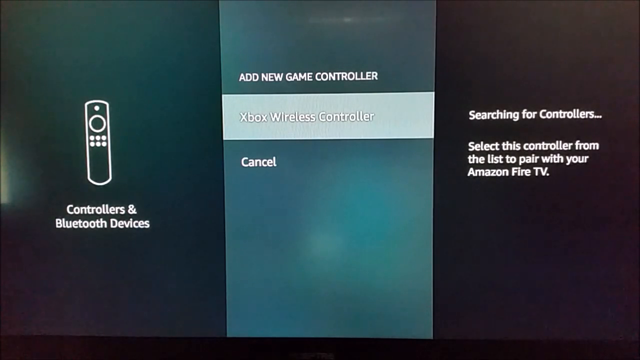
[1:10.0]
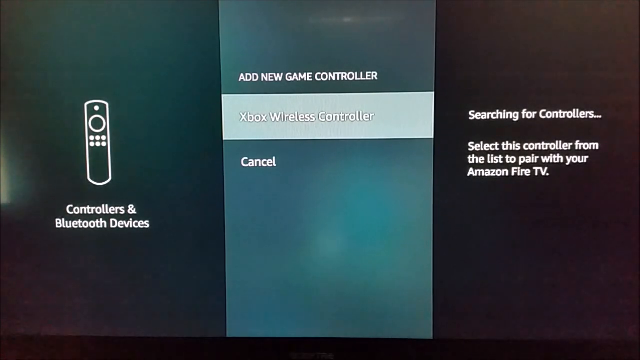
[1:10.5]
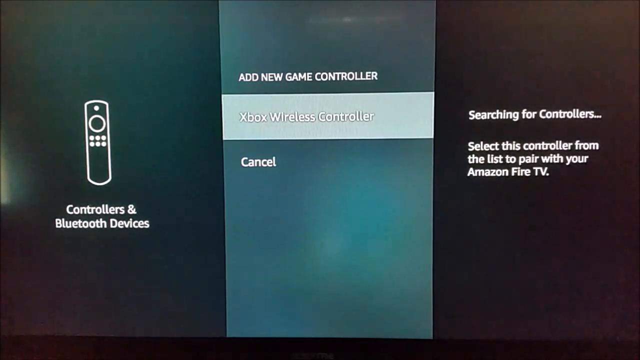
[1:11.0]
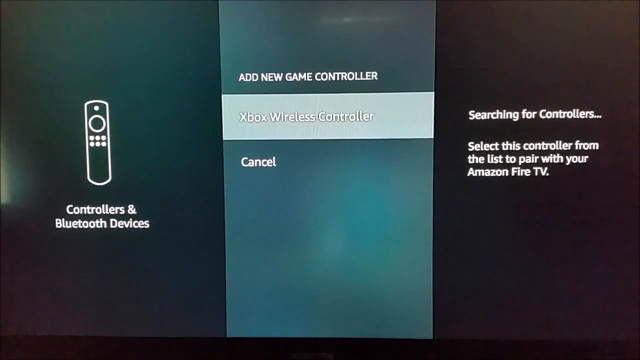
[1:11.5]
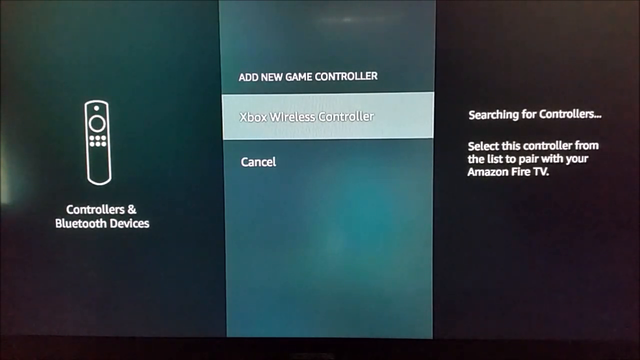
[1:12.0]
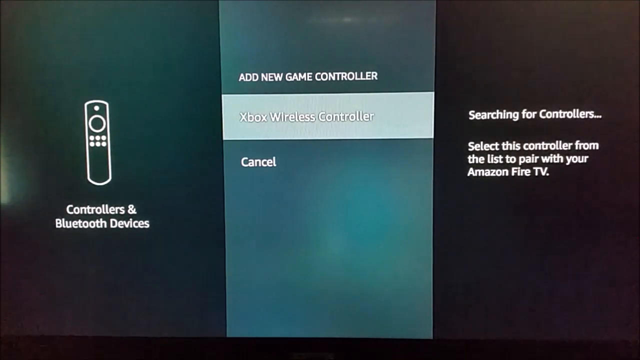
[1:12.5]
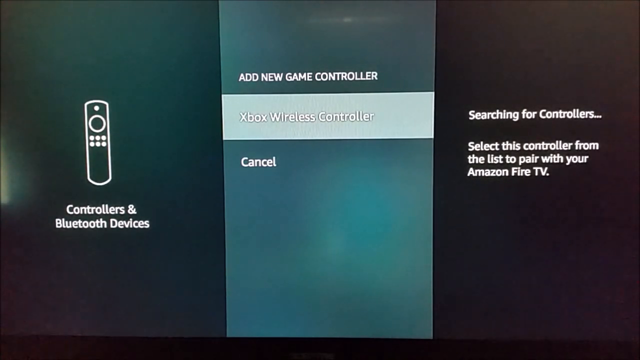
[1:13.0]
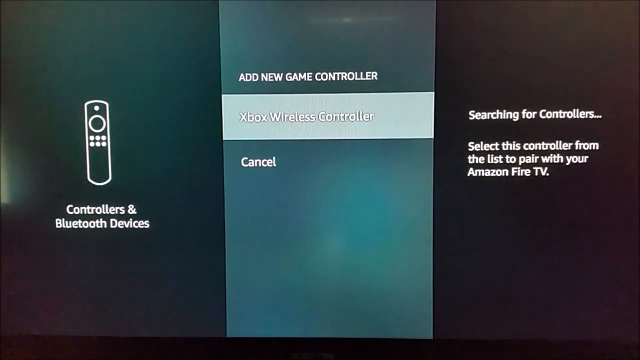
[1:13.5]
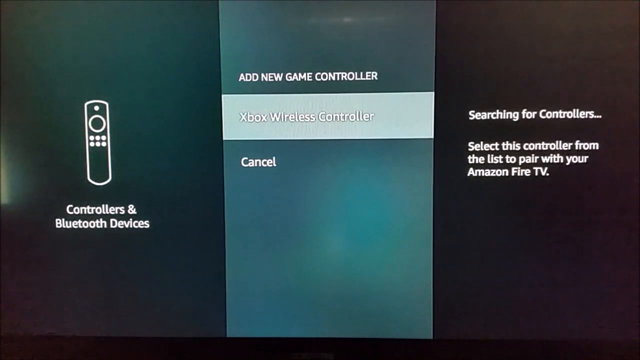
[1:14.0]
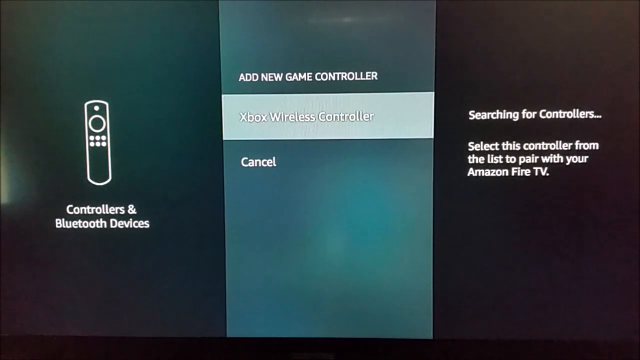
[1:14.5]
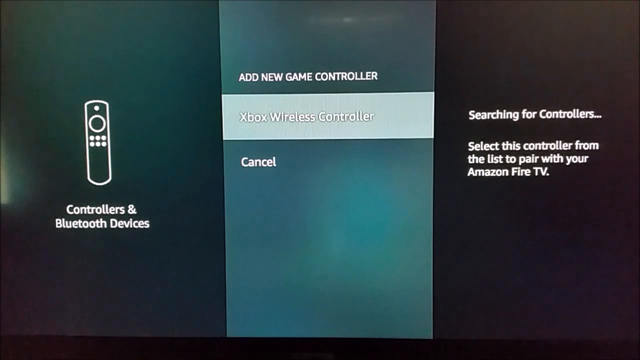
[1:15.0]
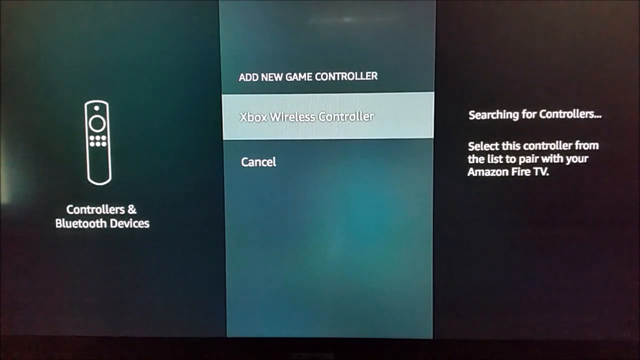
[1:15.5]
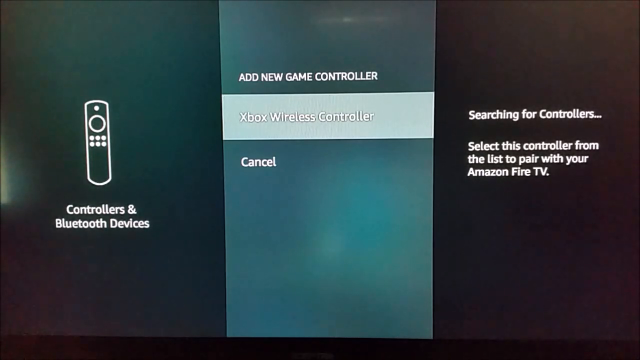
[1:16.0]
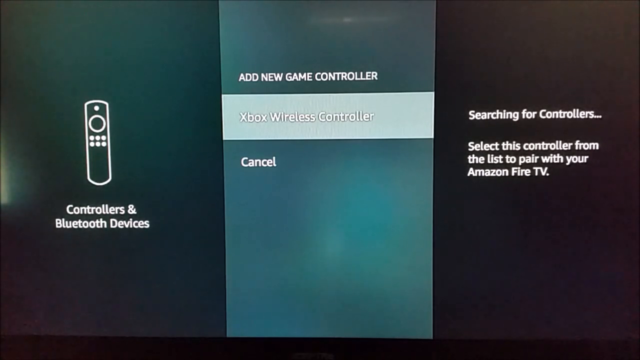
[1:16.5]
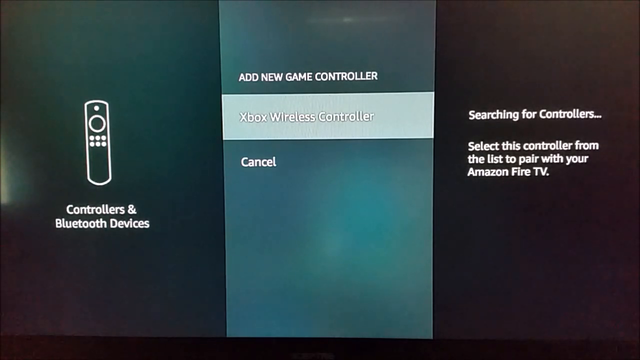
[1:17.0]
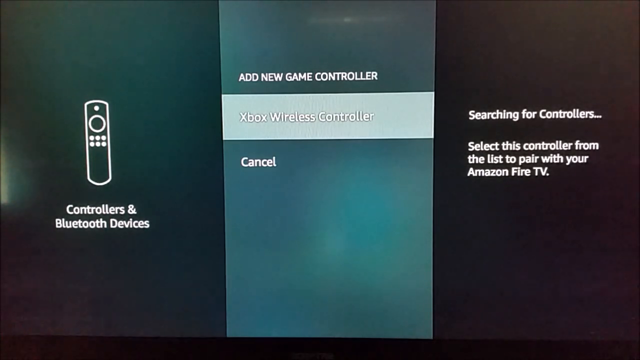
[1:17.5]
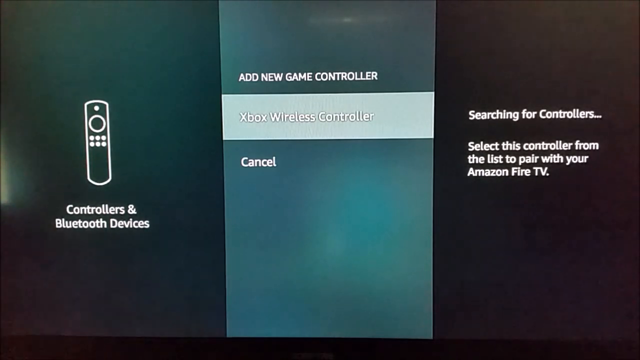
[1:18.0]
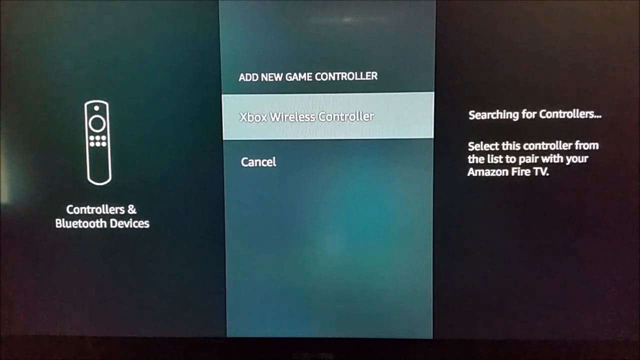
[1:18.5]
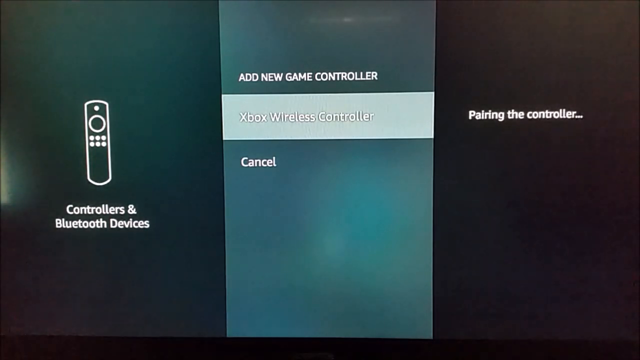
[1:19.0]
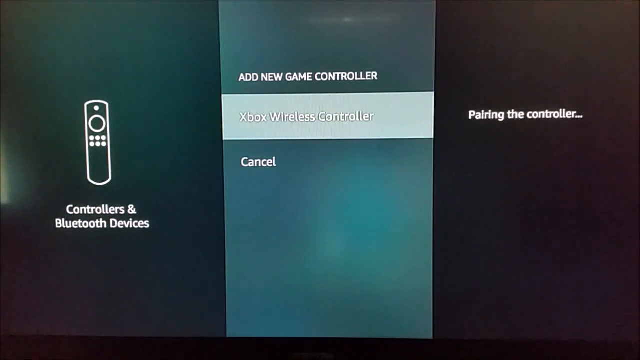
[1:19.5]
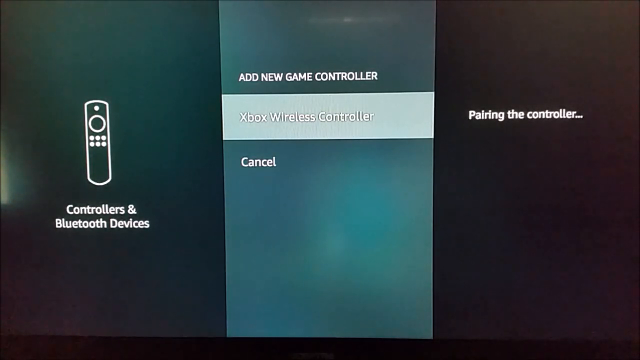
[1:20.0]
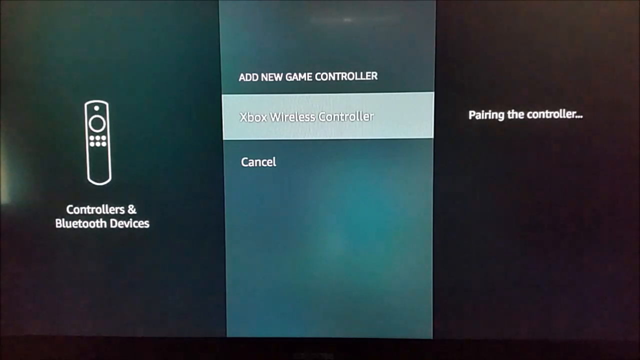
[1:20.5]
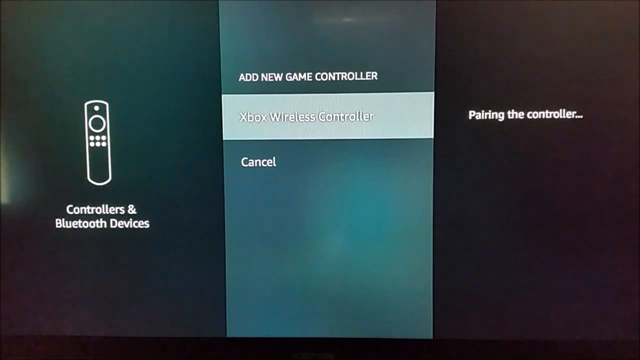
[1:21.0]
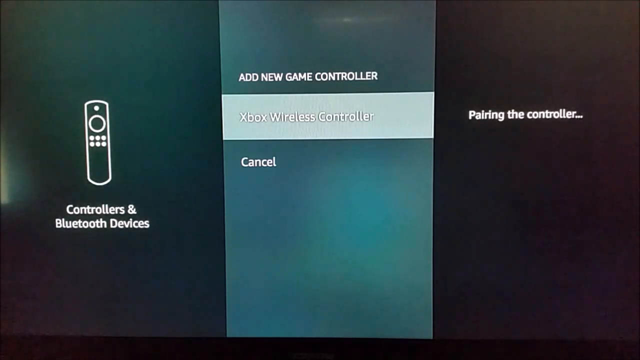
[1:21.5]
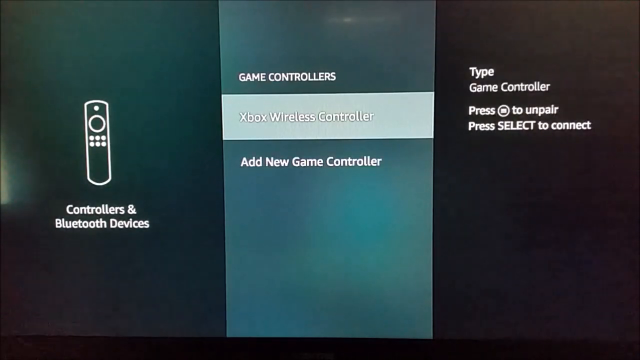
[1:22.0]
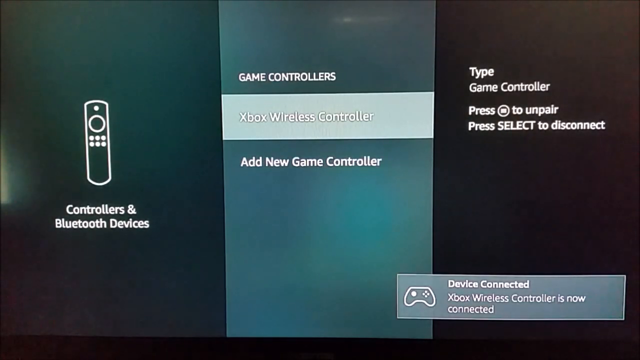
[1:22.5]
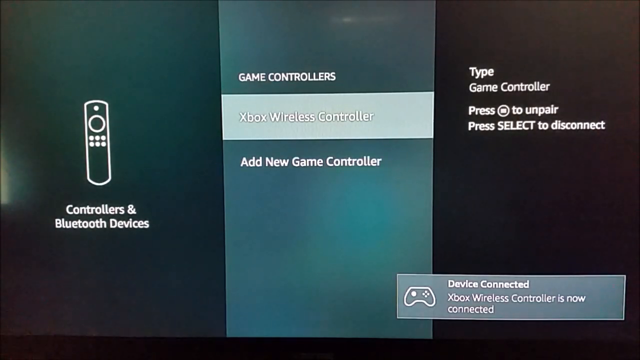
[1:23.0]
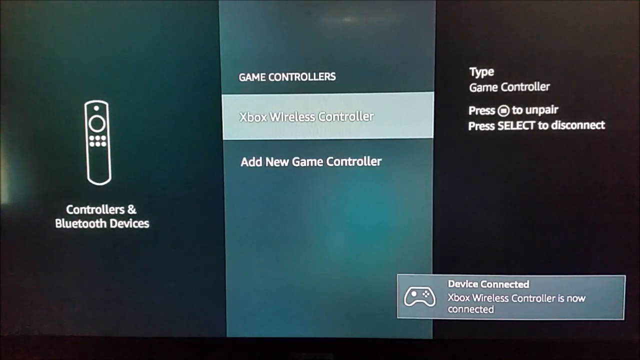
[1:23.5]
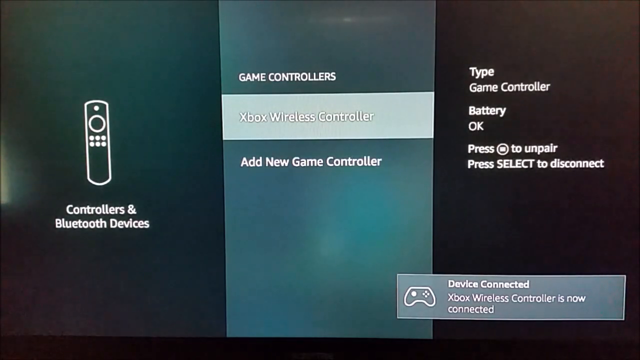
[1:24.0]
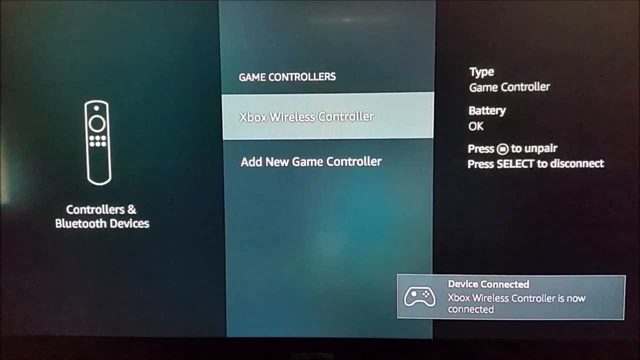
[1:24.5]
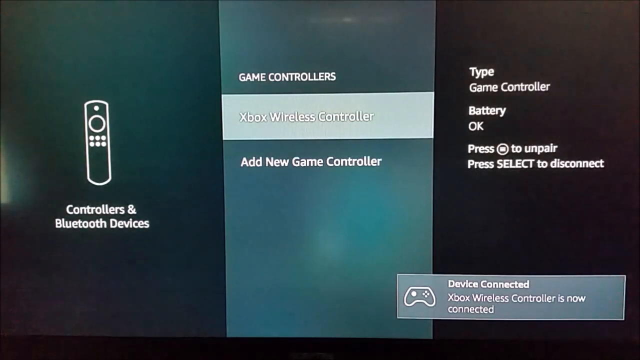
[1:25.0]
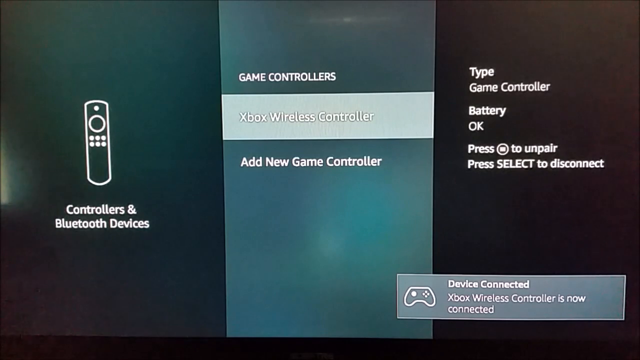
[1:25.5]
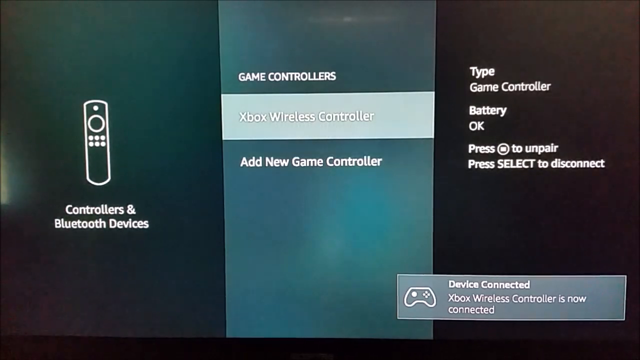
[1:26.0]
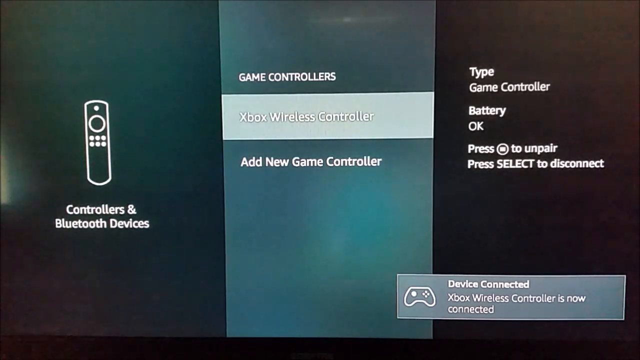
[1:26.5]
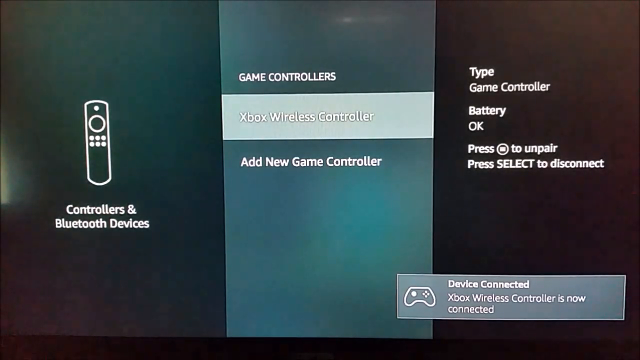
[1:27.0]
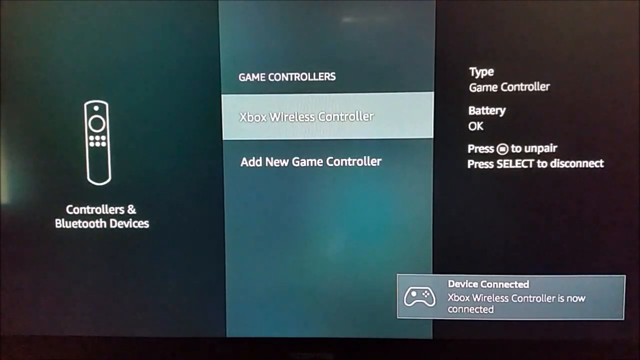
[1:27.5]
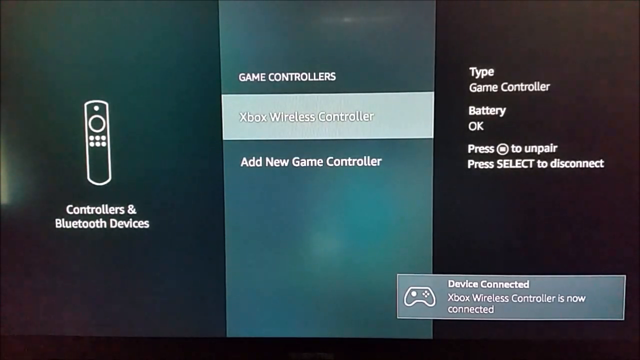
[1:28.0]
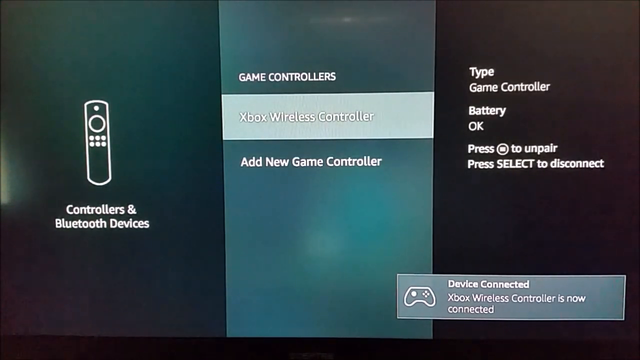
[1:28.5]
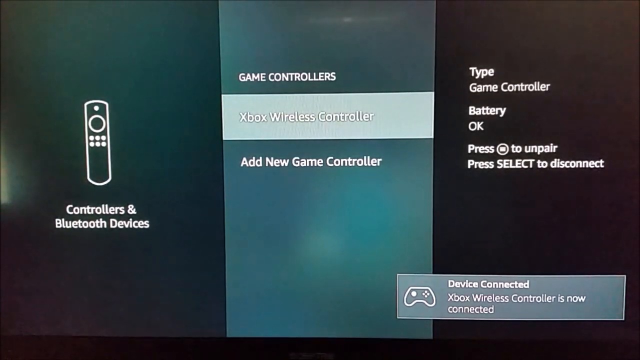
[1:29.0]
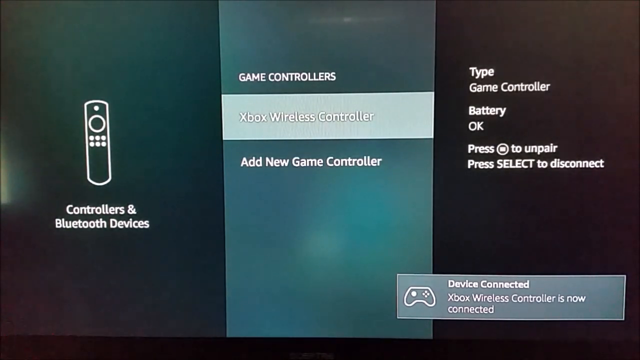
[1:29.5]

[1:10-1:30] The controller is pairing, and on-screen instructions explain how pairing is done, including "press the button to unpair." A notification then appears indicating a device has been connected: "device connected" and "Xbox wireless controller is now connected."